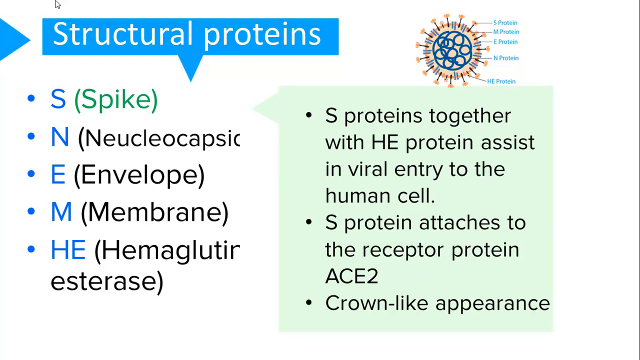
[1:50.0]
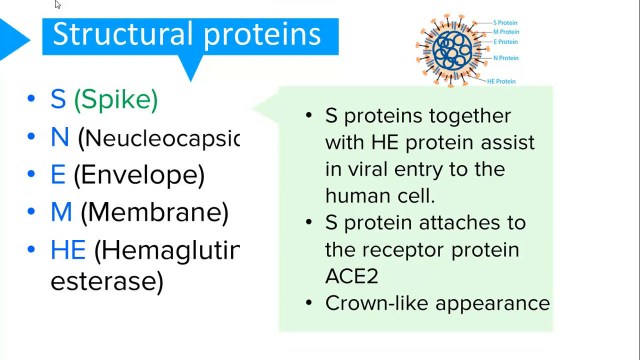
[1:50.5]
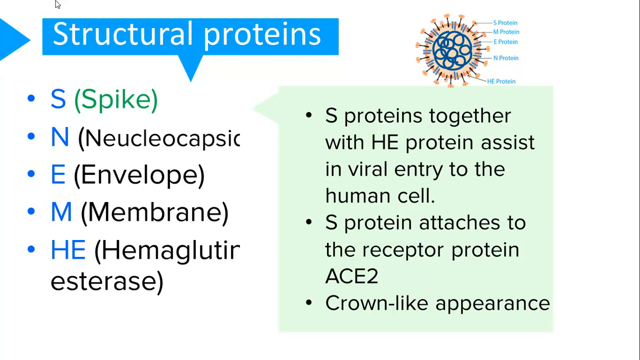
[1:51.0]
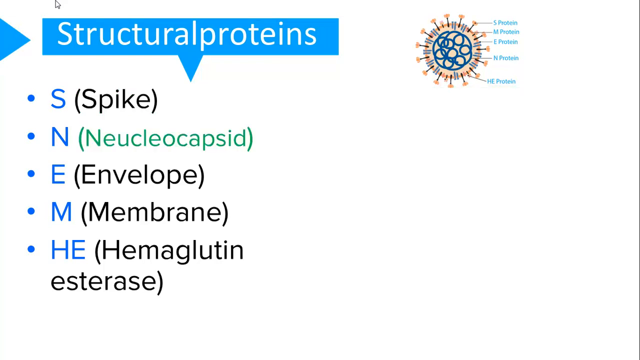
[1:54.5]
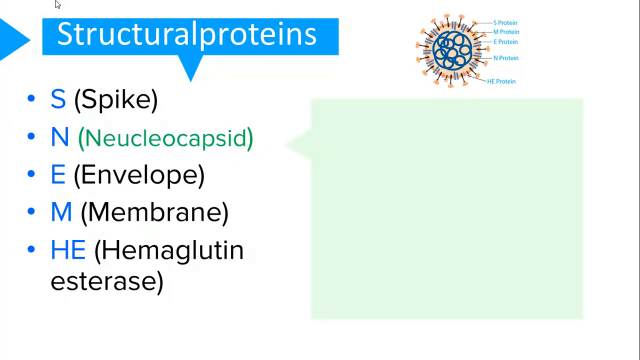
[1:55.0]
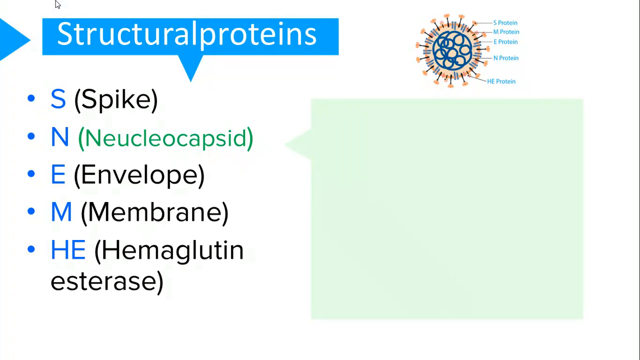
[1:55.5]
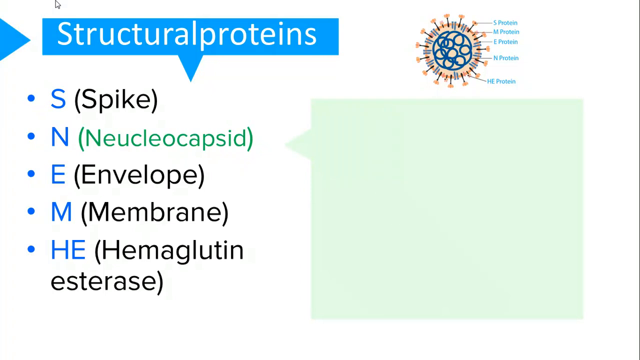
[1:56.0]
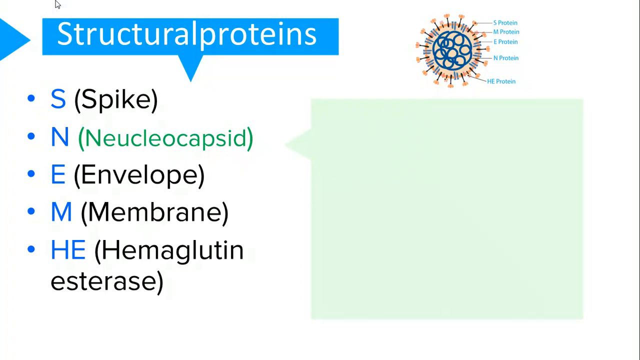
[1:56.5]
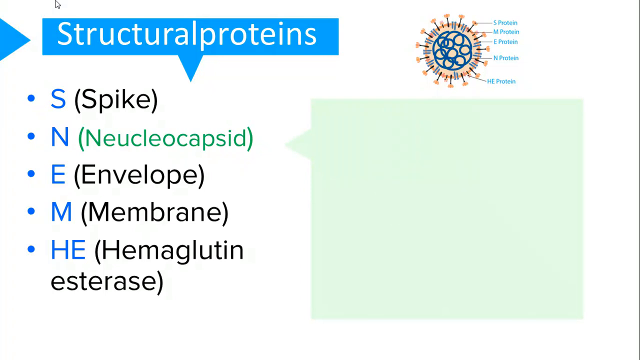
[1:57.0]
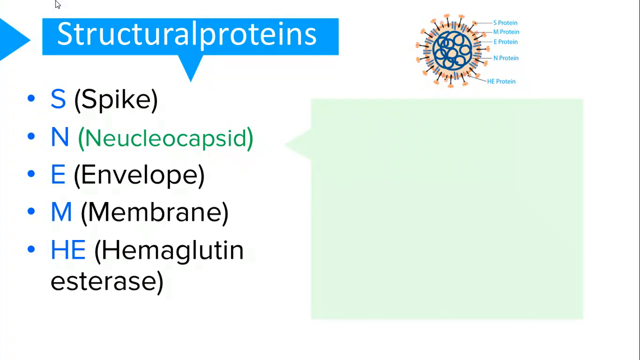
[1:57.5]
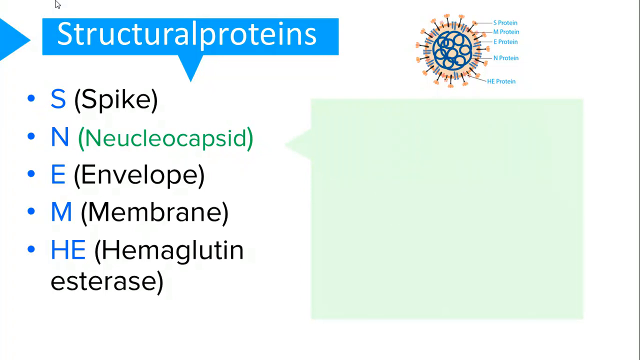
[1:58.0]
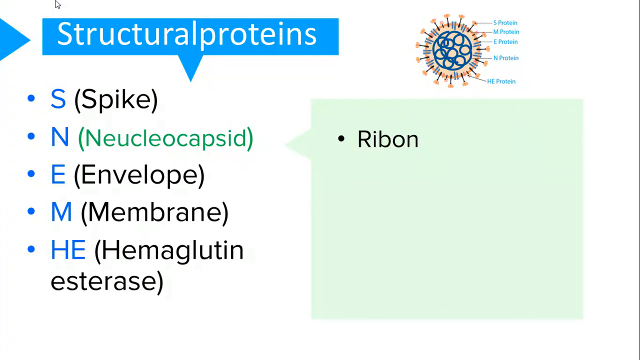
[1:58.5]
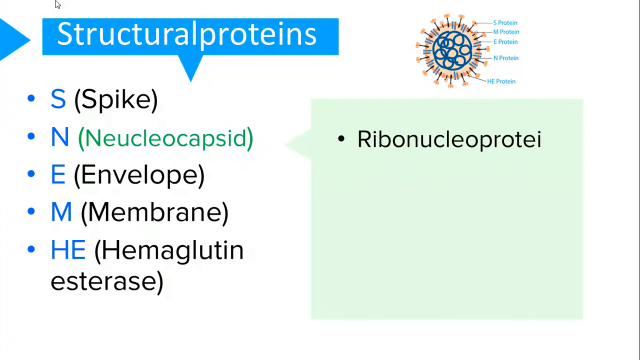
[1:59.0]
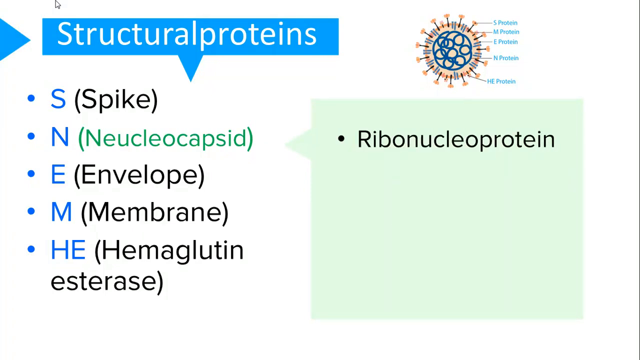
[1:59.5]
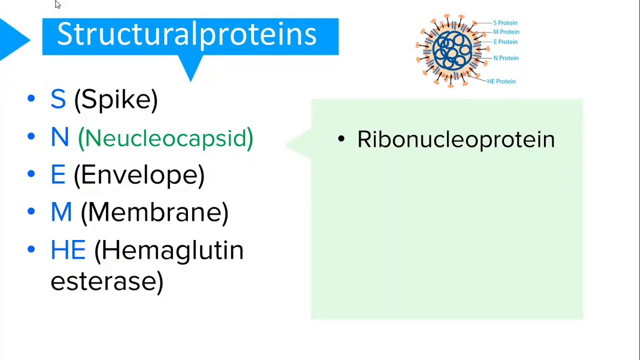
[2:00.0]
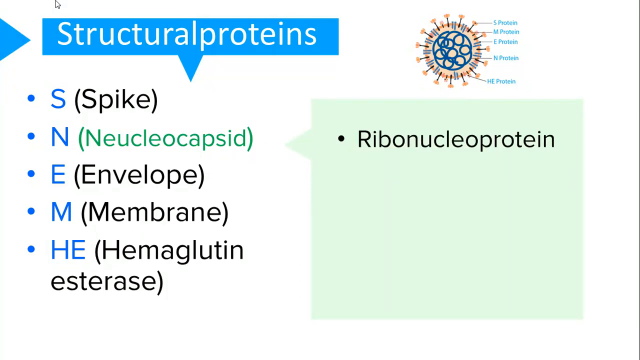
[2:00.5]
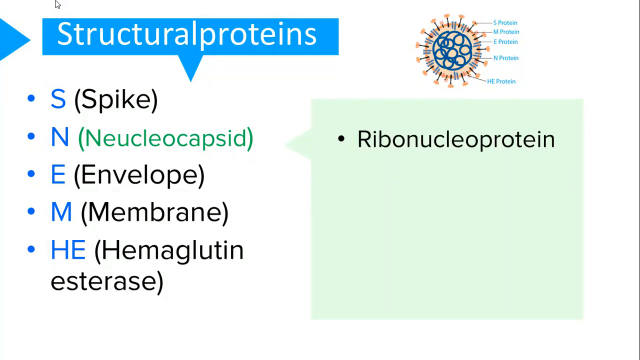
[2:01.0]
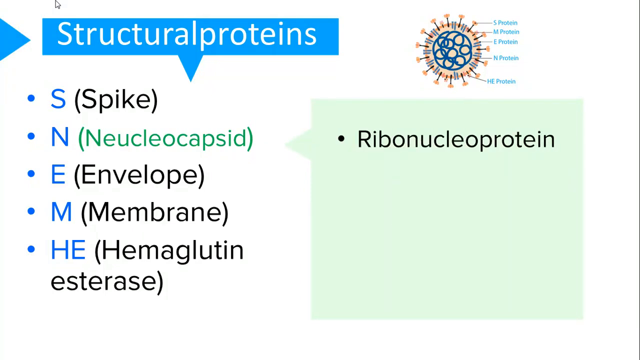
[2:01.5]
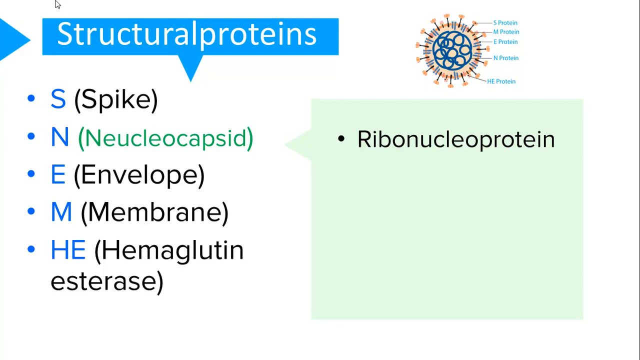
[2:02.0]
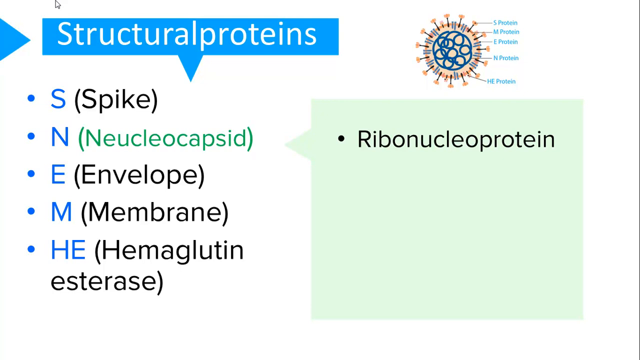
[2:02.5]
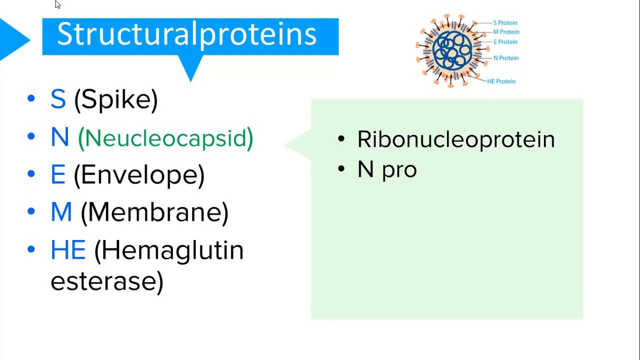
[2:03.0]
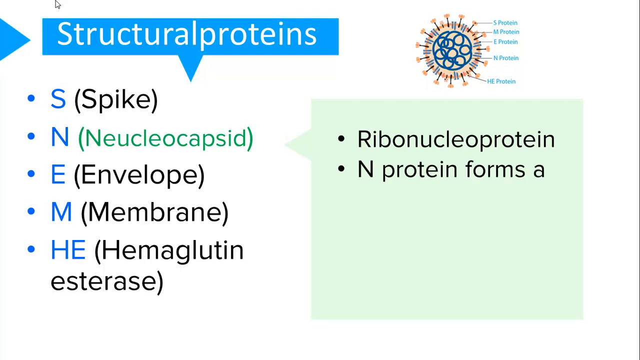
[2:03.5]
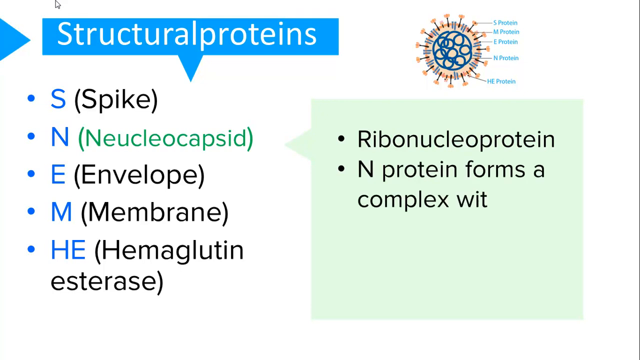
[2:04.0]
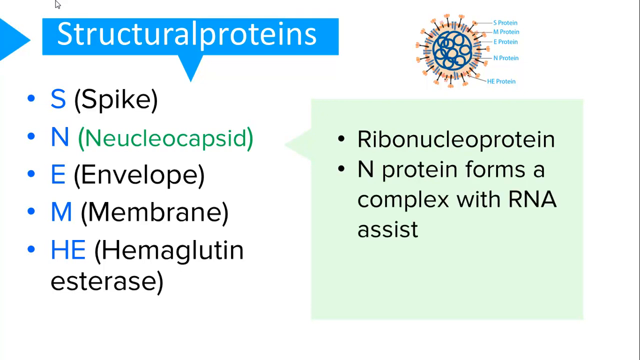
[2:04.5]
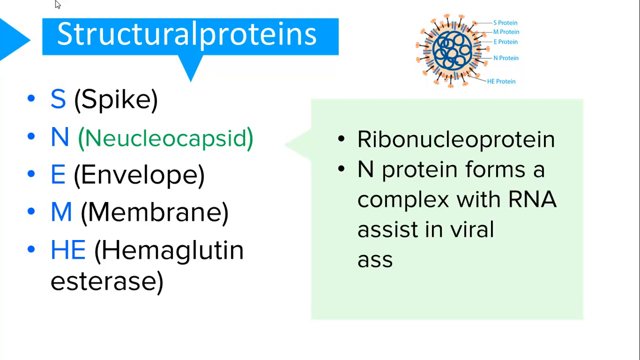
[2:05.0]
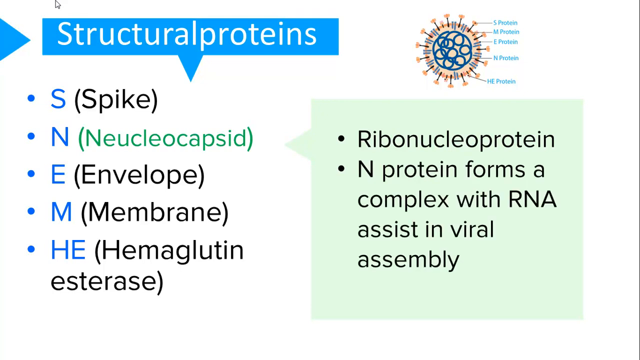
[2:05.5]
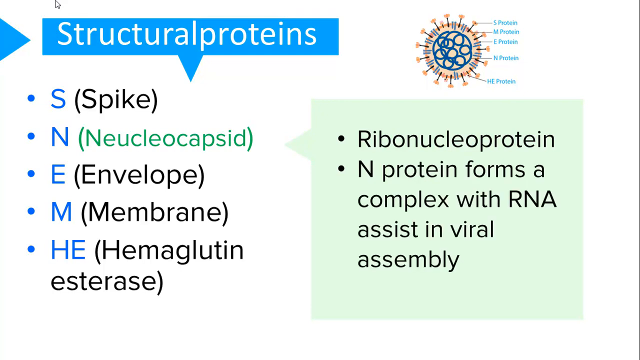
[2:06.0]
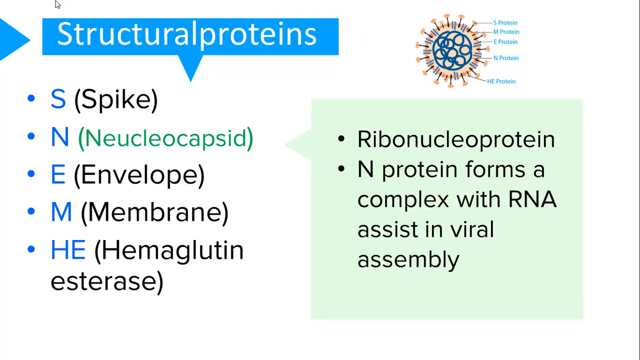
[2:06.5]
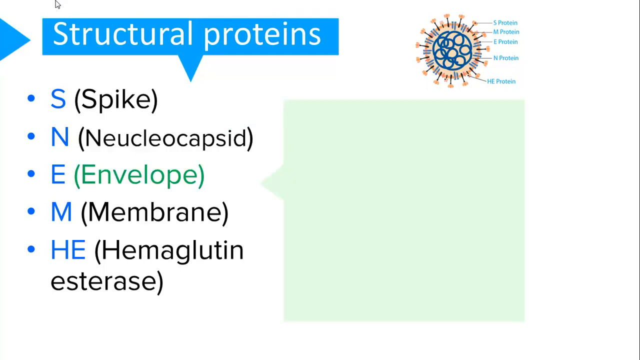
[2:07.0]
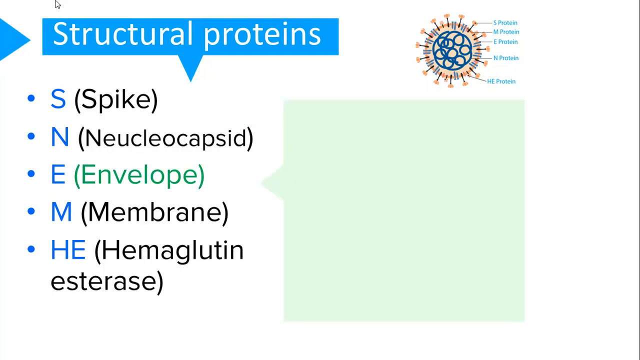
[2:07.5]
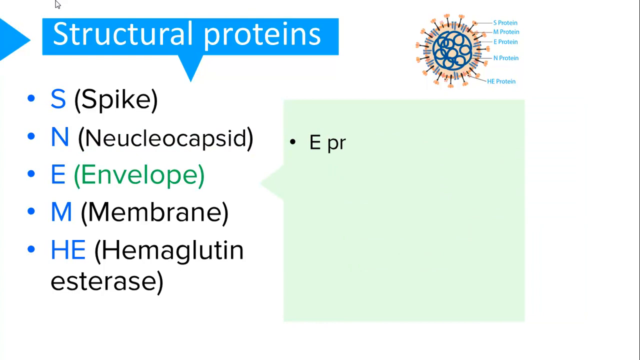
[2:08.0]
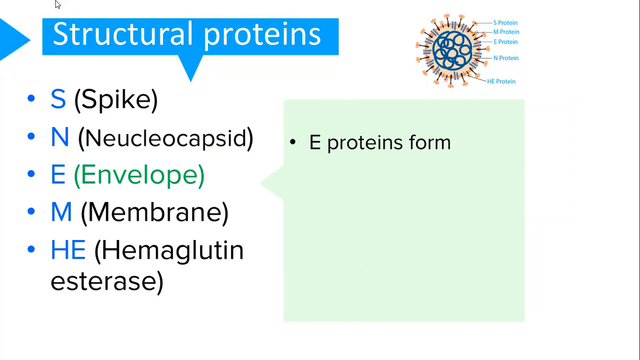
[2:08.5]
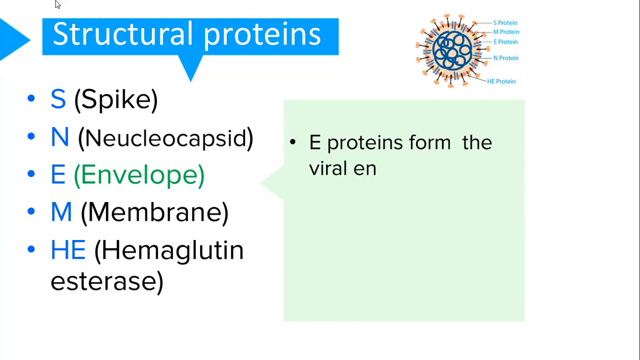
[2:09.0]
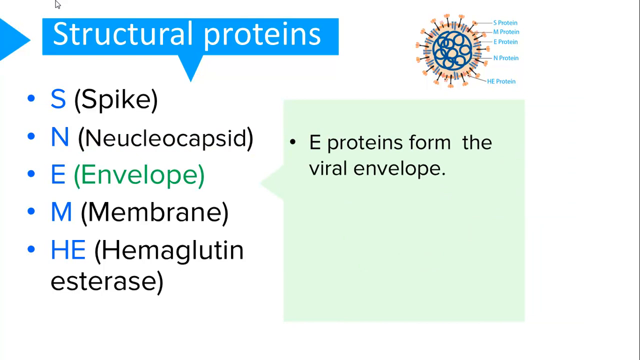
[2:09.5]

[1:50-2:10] The bulleted list inside the green box fades away, and the box moves over, revealing the initial list underneath "Structural Proteins" that it had obscured. The box darkens in color and another list begins typing on it. The first bullet point is labeled "ribonucleoprotein", and underneath it says that the N protein forms a complex with RNA to assist in viral assembly. When the ribonucleoprotein bullet point appears, the word "nucleocaspid" is highlighted in green and the "spike" text returns to black, apparently indicating that the highlighted word relates to the information in the box. The text then disappears and a new list appears stating that the E proteins form the viral envelope.